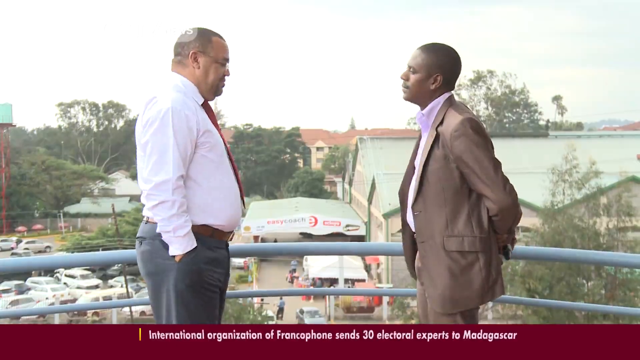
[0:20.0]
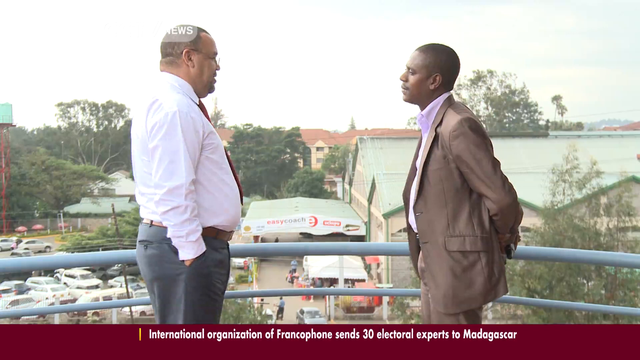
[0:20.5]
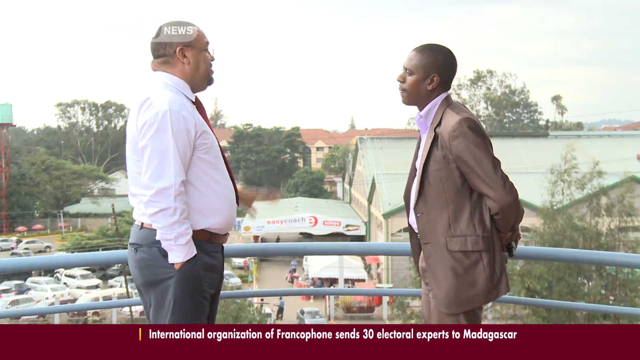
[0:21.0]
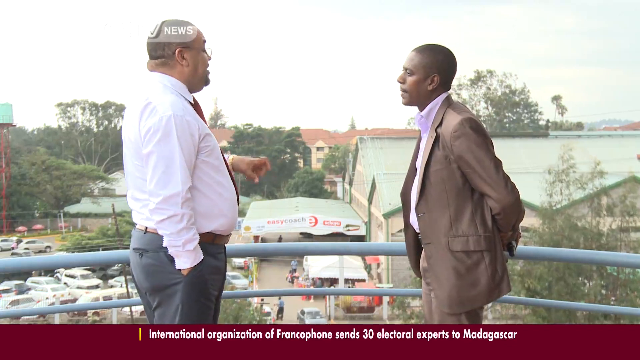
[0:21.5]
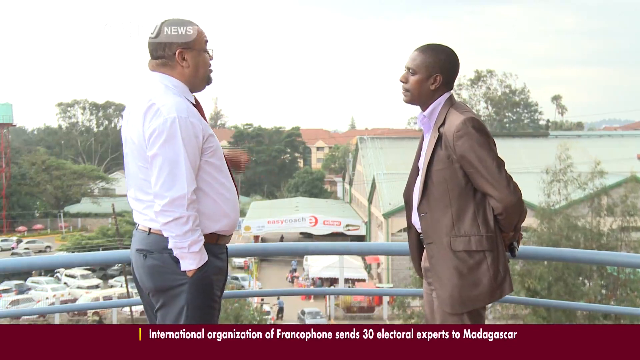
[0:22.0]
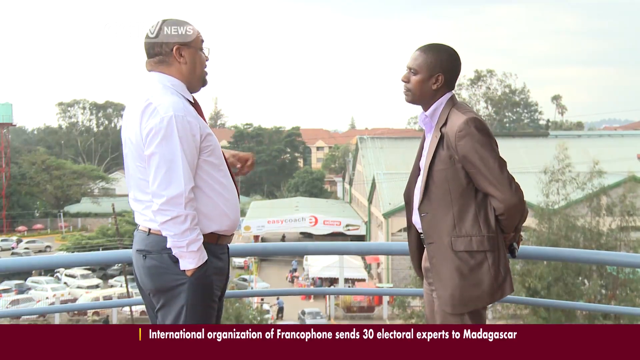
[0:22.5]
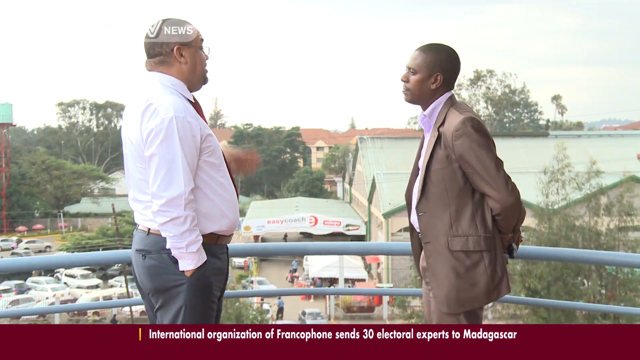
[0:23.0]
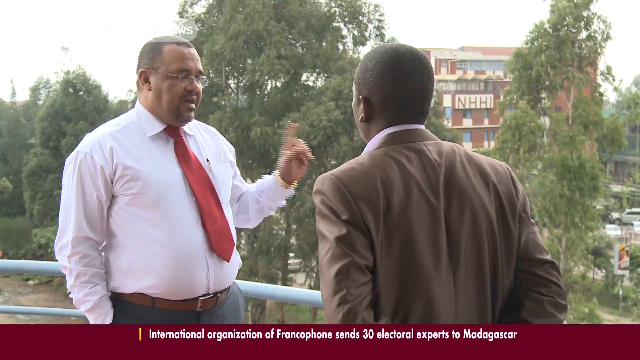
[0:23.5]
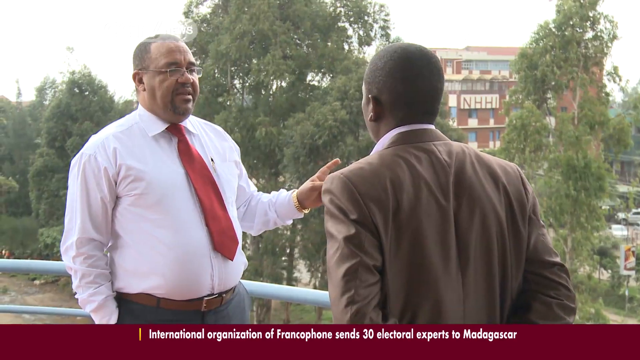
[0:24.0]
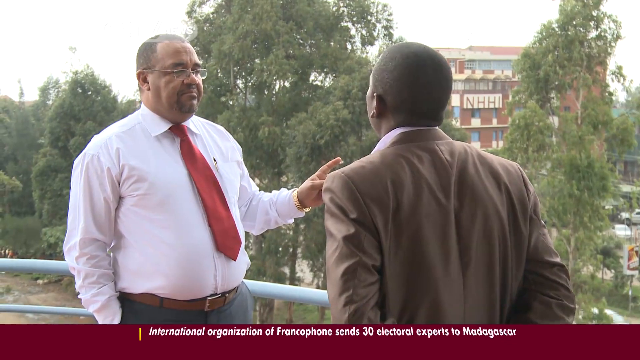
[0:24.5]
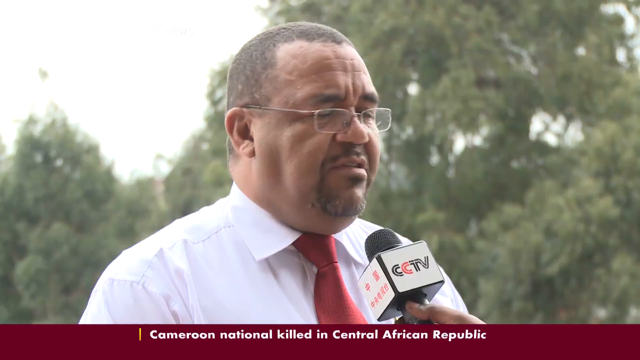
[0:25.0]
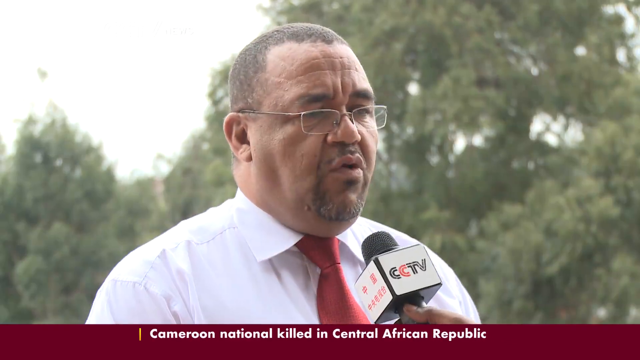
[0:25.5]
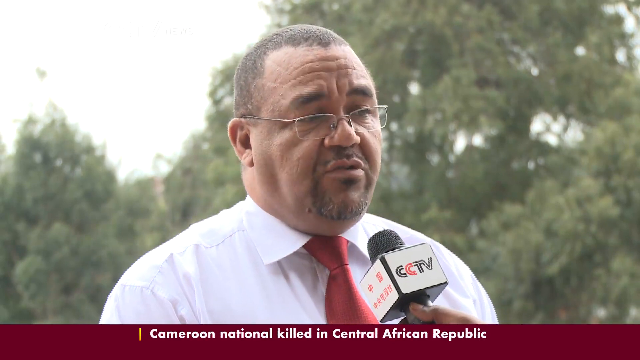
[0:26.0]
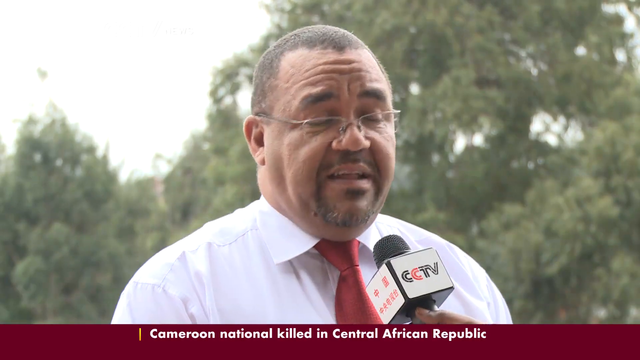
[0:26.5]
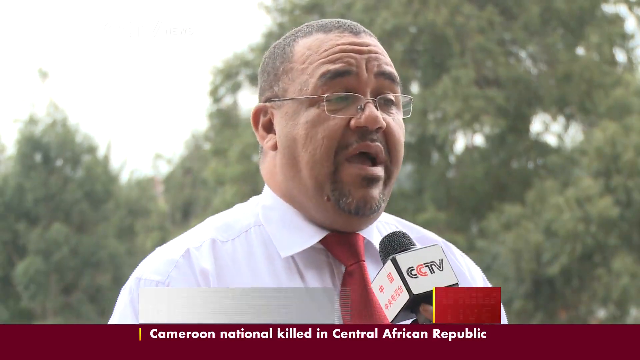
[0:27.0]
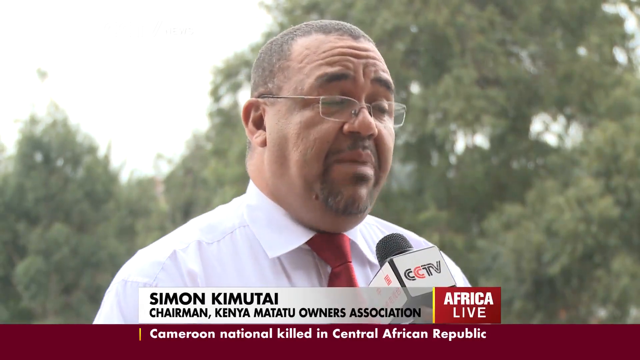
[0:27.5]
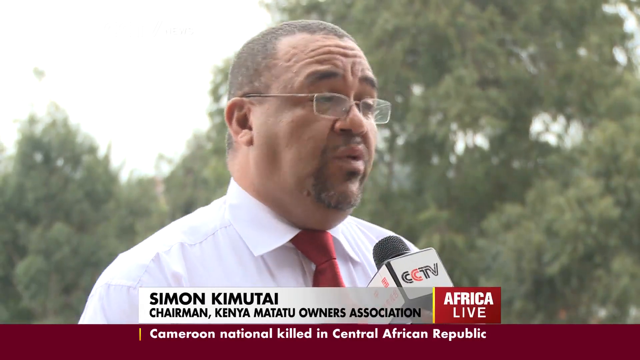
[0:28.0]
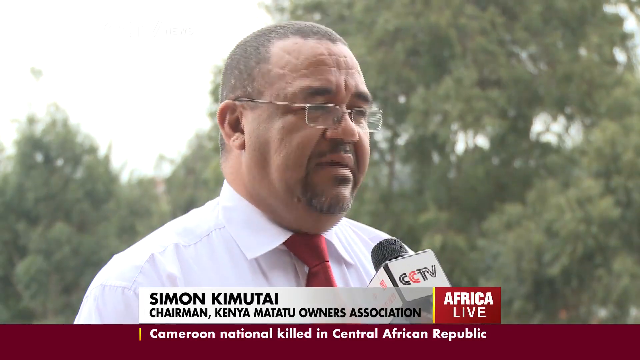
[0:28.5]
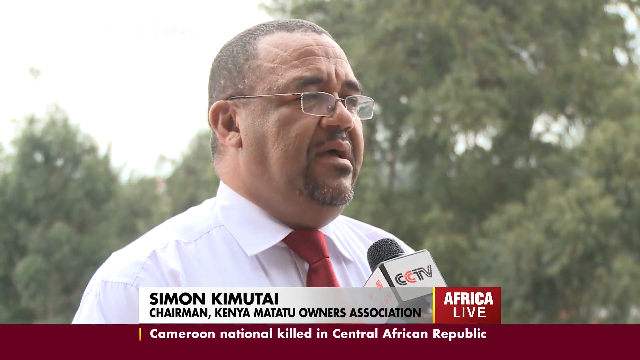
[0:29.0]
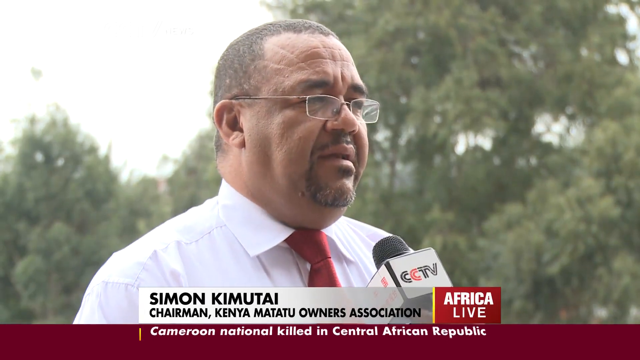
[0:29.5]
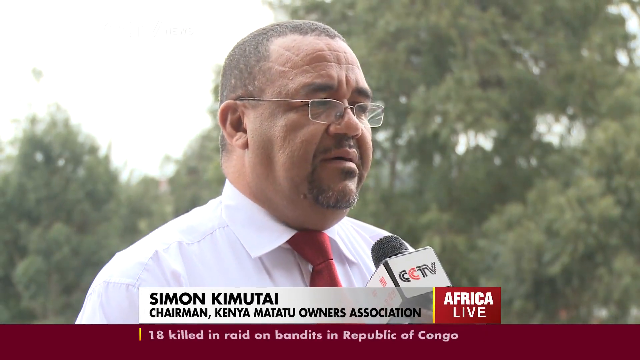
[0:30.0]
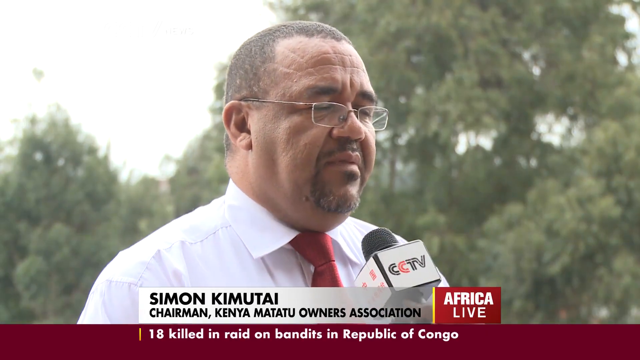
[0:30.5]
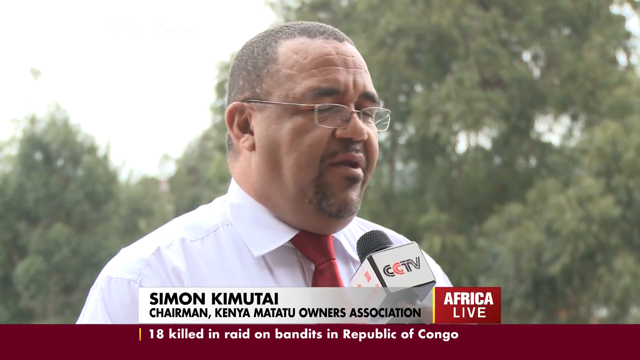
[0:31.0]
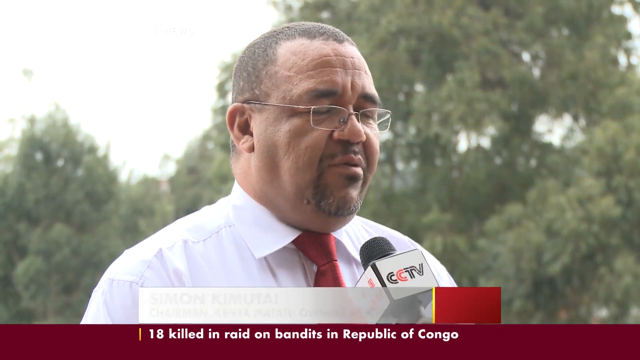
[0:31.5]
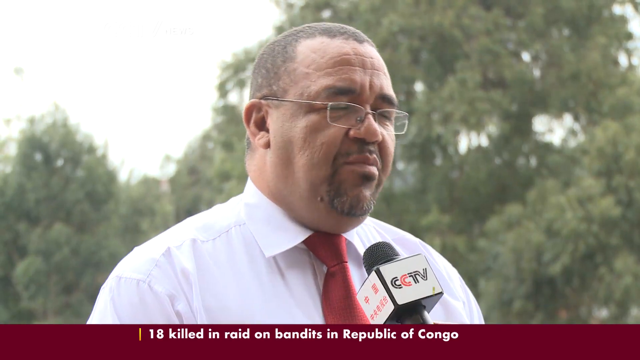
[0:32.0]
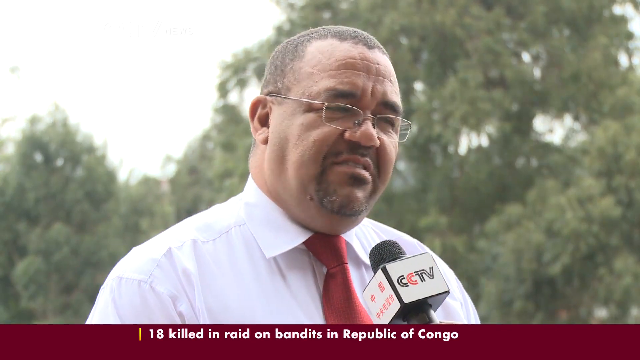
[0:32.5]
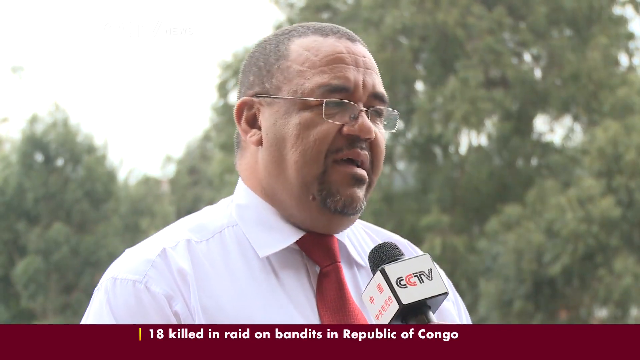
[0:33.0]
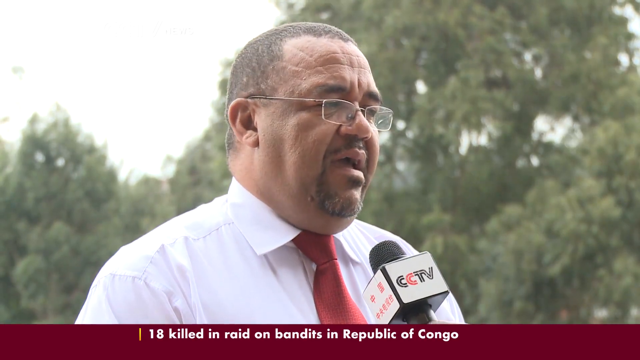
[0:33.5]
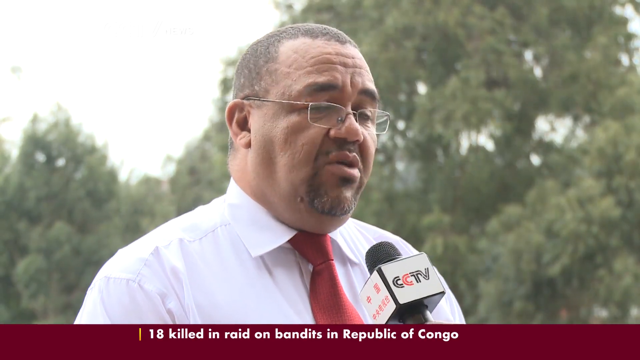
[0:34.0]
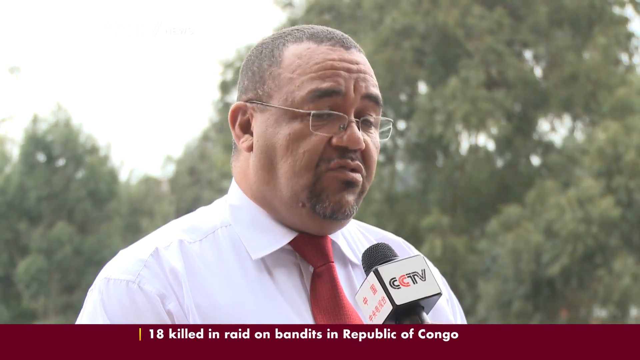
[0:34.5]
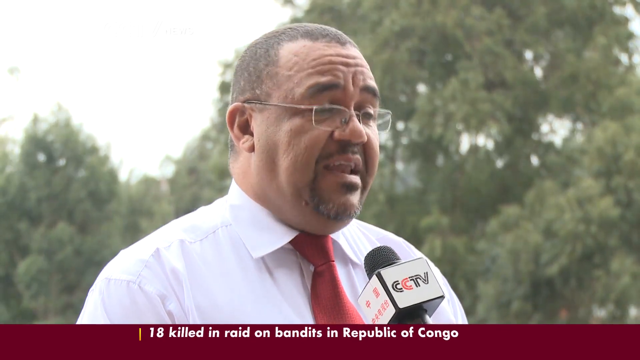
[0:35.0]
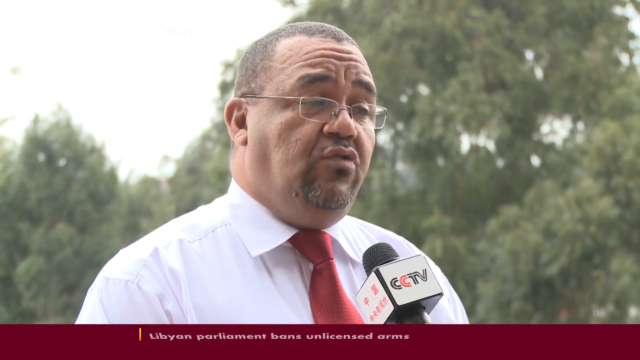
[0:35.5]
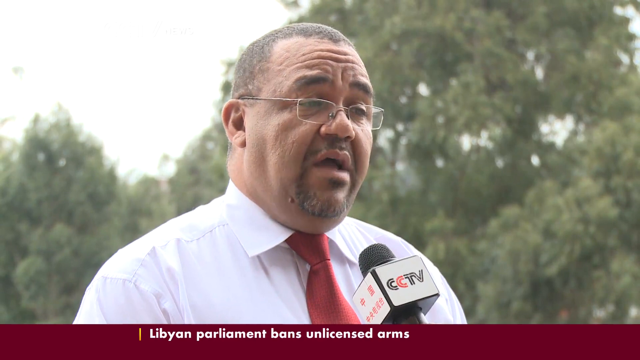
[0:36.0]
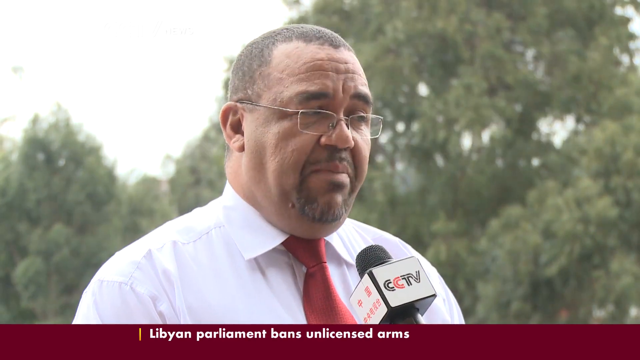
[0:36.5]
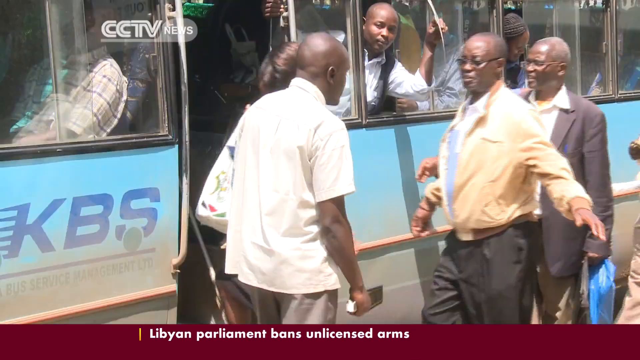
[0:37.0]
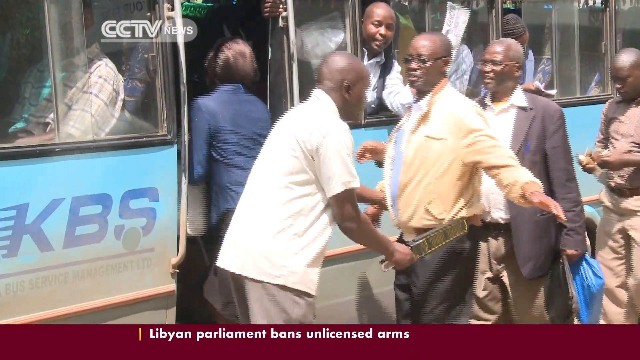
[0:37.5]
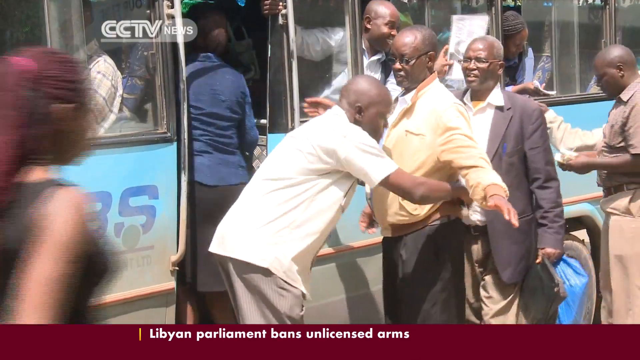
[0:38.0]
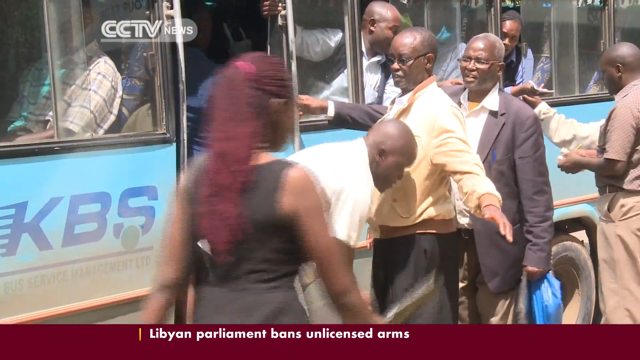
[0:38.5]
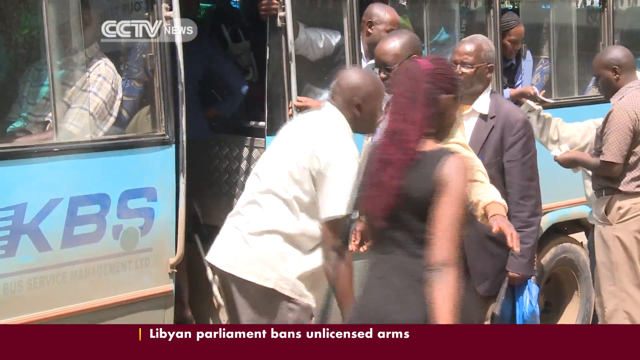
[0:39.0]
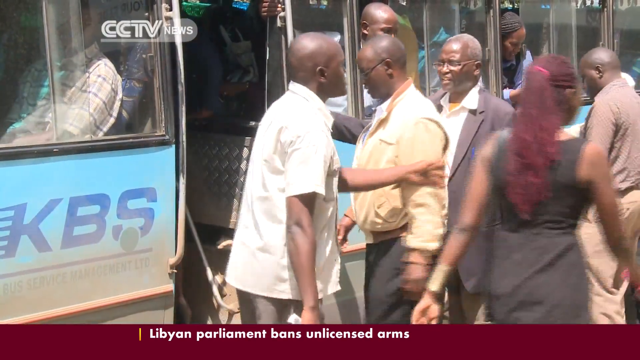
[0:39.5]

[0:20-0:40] The two men face each other and talk. The man on the left wears gray slacks, a long-sleeve white shirt and a red tie, and has short dark hair and glasses; his hands are in his pockets. The man on the right wears a tan suit and what looks like a pink dress shirt with no visible tie; he has short hair and no glasses, and his hands are behind him. Both are African-American. The man on the left, Simon Kamutai, chairman of Kenya Matatus Owners Association, speaks into a microphone held up to him. Text reads "18 killed in a raid on bandits in Republic of Congo." CCTV footage shows people about to get on a bus passing through a portable metal detector. The man with the red tie continues talking.